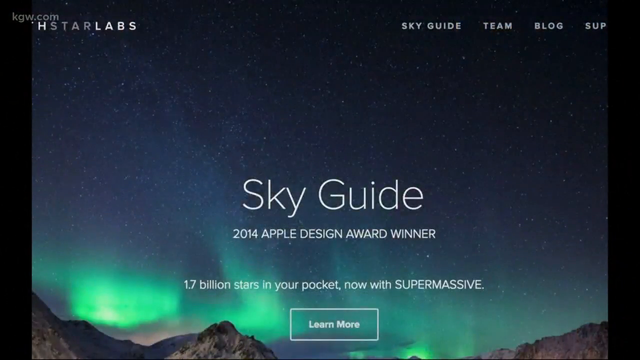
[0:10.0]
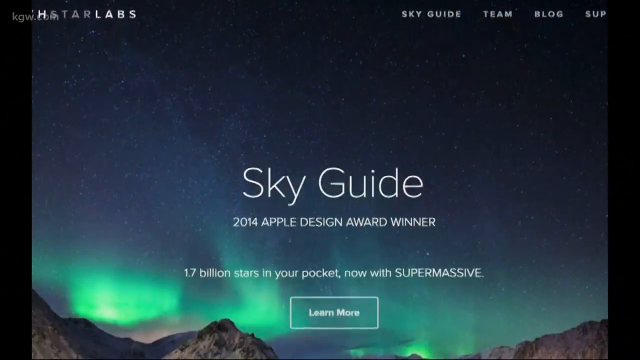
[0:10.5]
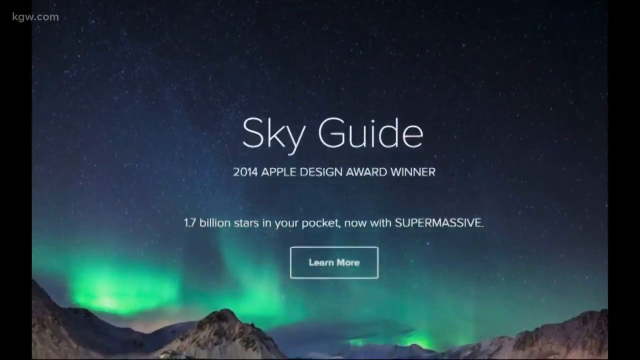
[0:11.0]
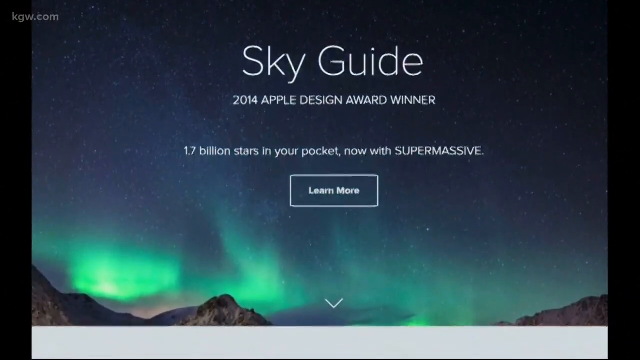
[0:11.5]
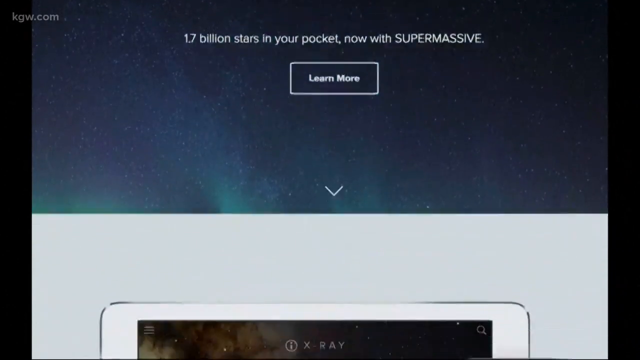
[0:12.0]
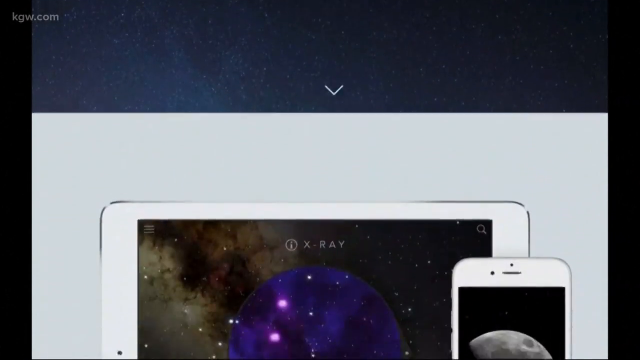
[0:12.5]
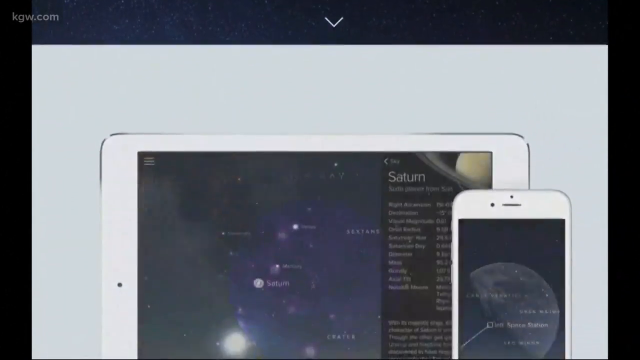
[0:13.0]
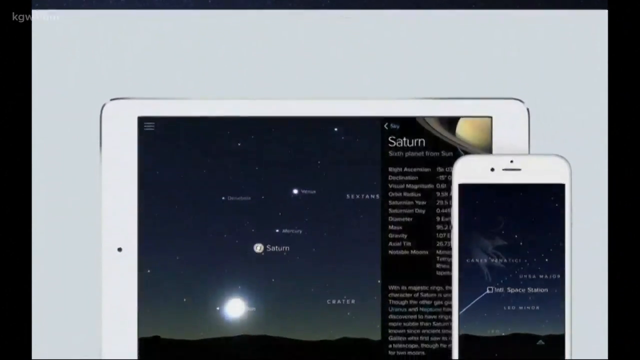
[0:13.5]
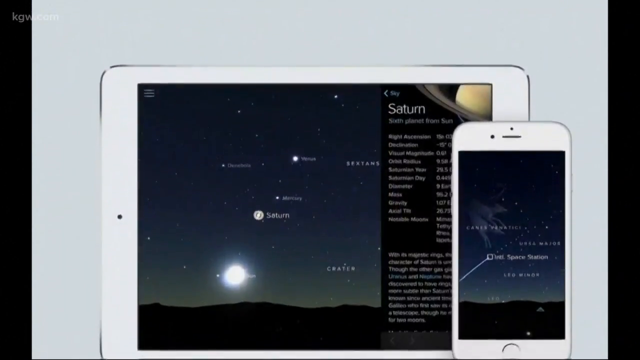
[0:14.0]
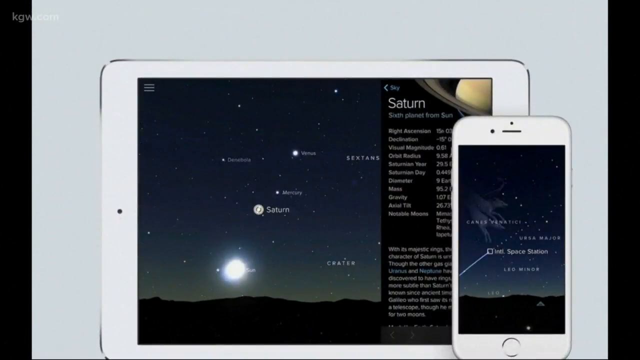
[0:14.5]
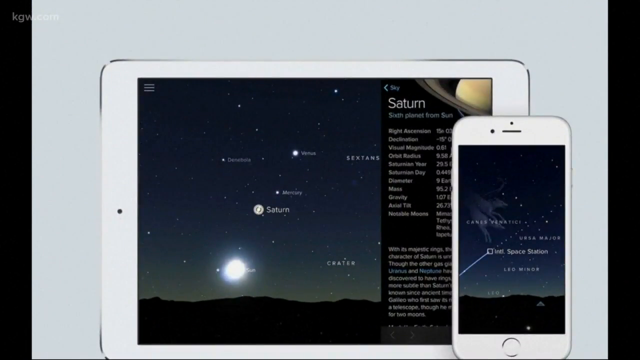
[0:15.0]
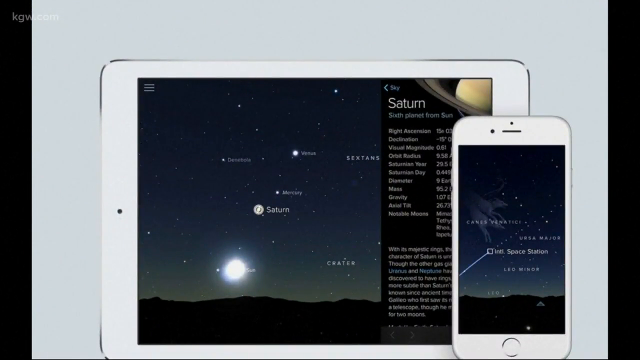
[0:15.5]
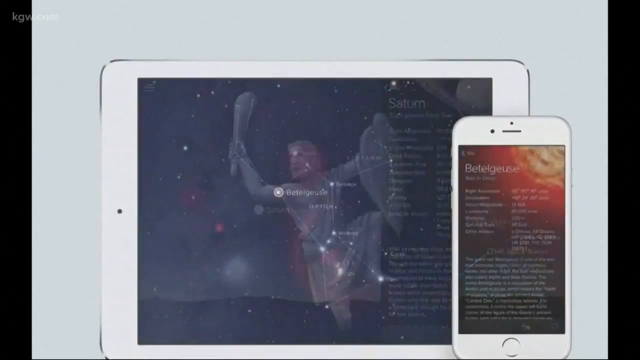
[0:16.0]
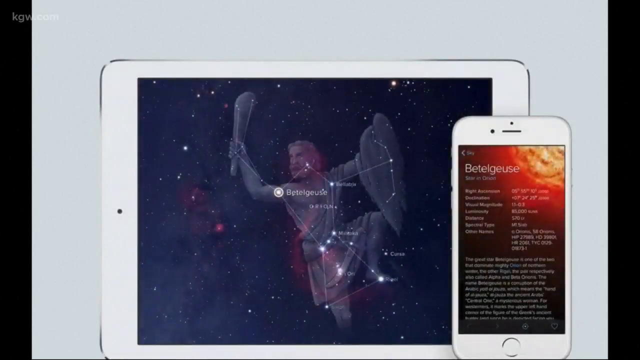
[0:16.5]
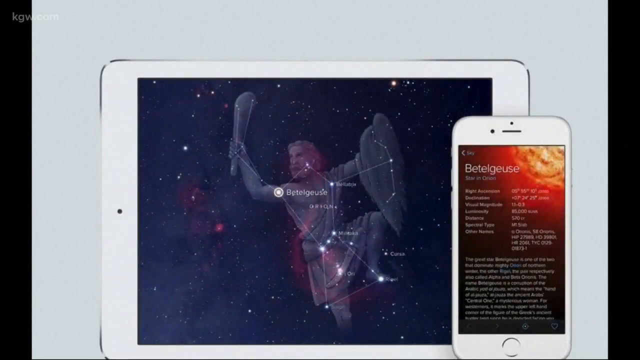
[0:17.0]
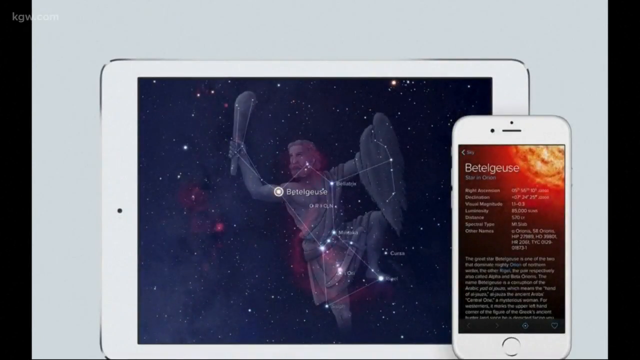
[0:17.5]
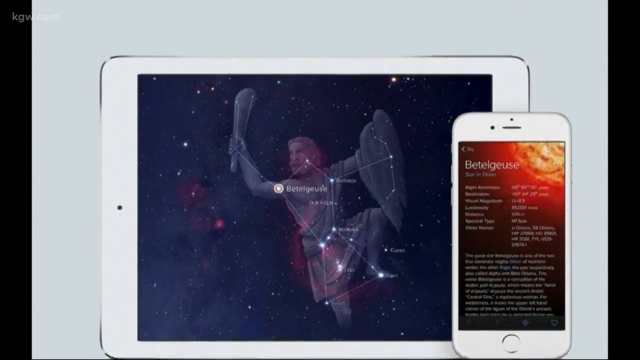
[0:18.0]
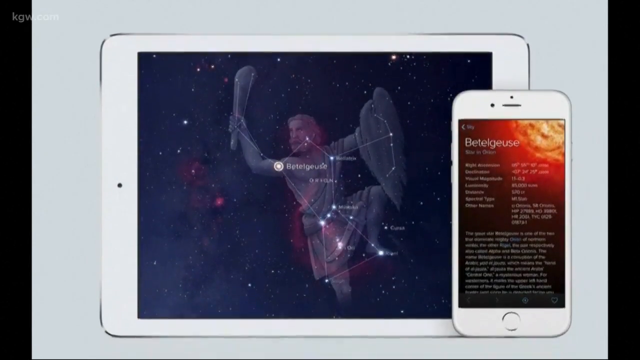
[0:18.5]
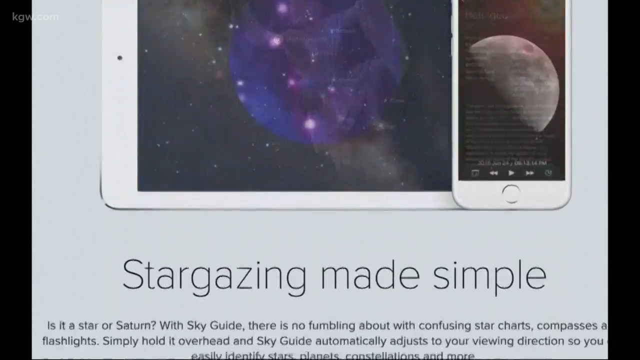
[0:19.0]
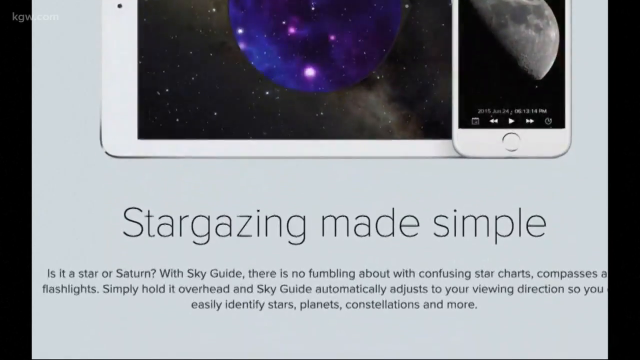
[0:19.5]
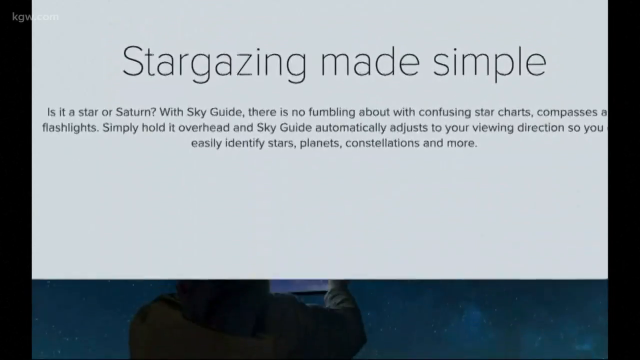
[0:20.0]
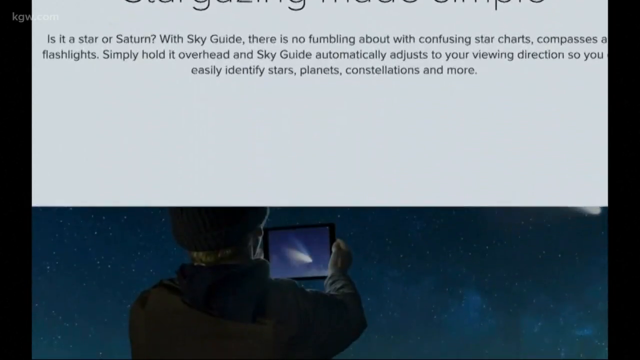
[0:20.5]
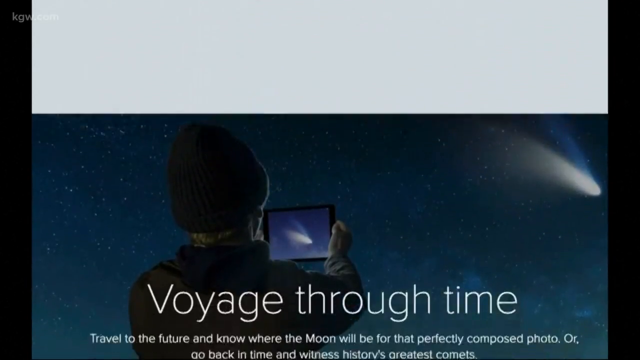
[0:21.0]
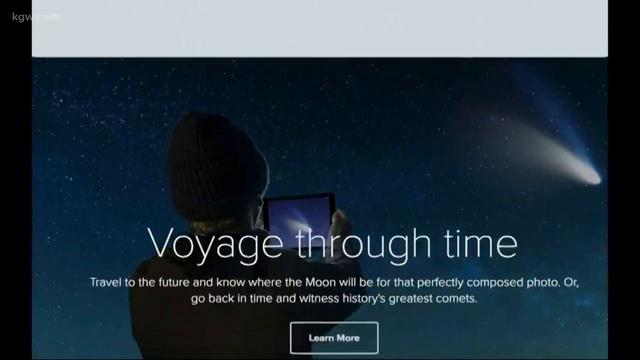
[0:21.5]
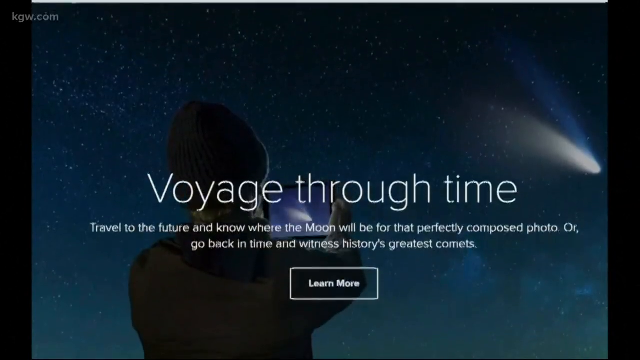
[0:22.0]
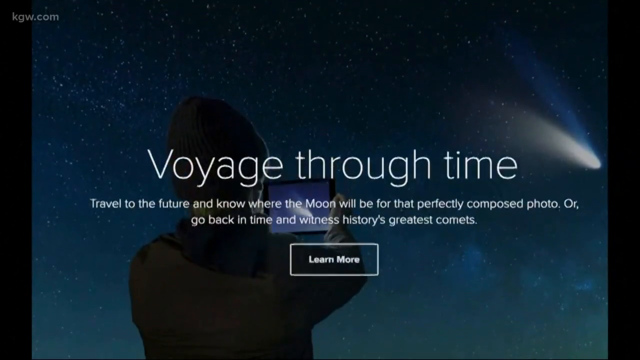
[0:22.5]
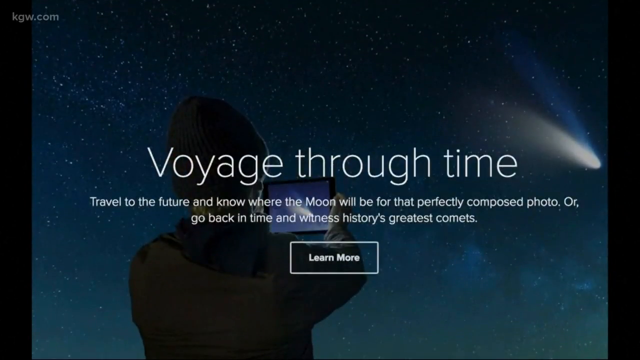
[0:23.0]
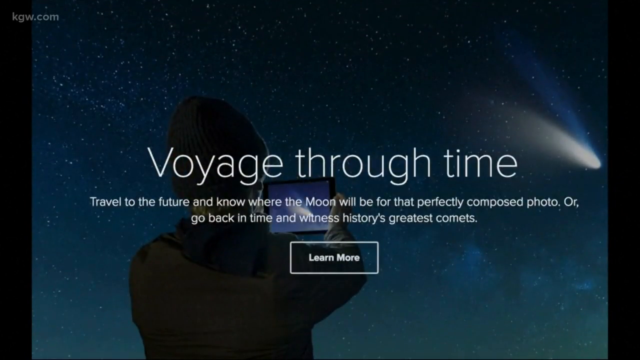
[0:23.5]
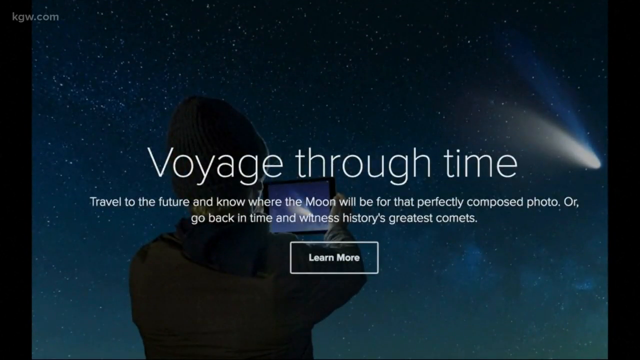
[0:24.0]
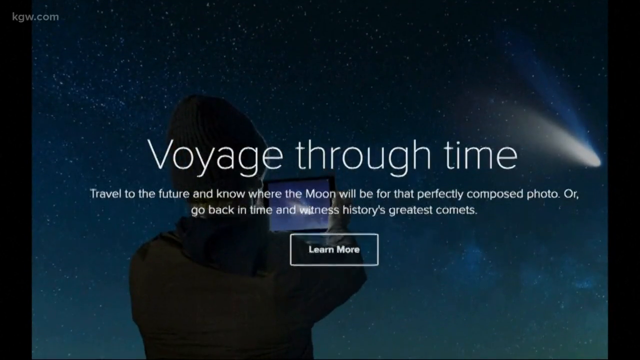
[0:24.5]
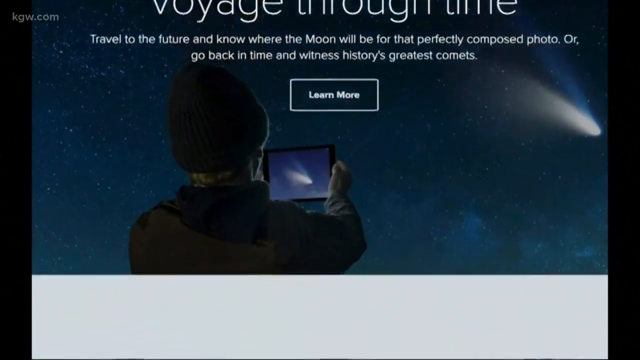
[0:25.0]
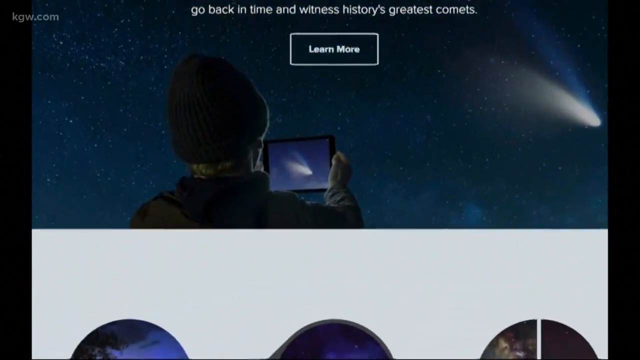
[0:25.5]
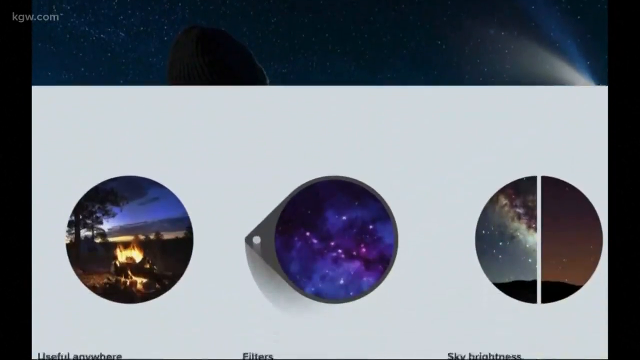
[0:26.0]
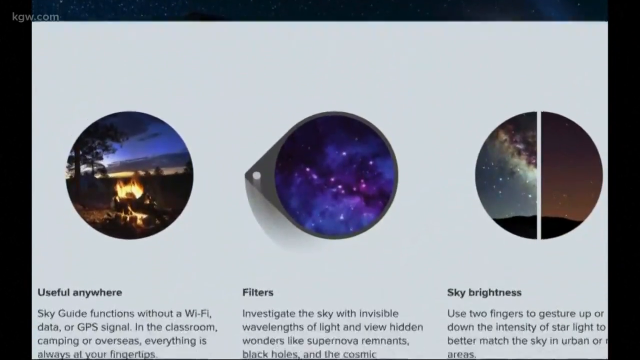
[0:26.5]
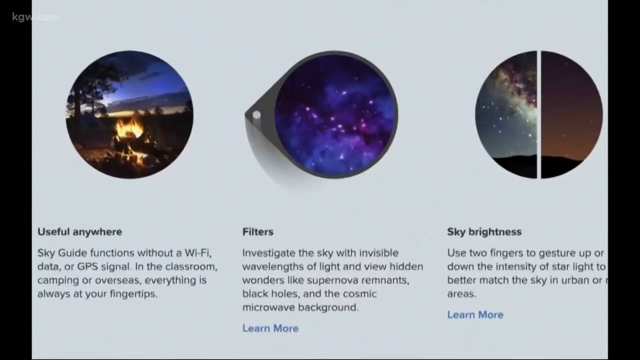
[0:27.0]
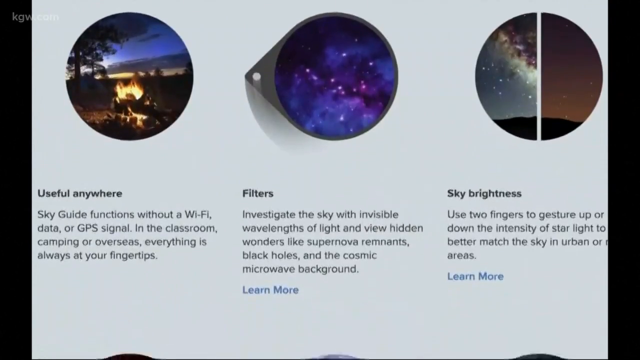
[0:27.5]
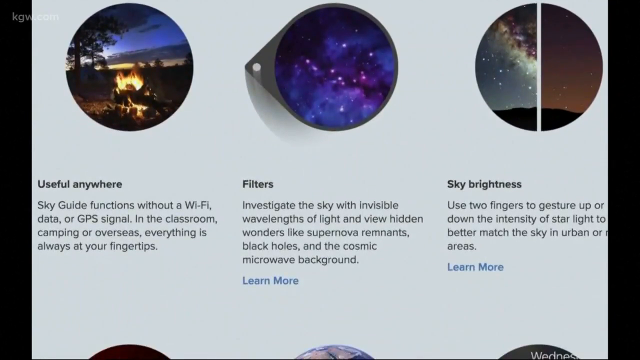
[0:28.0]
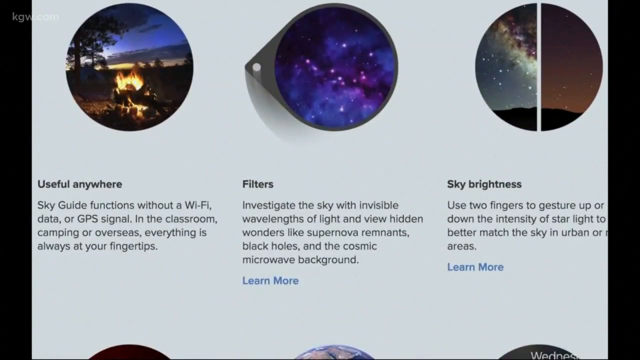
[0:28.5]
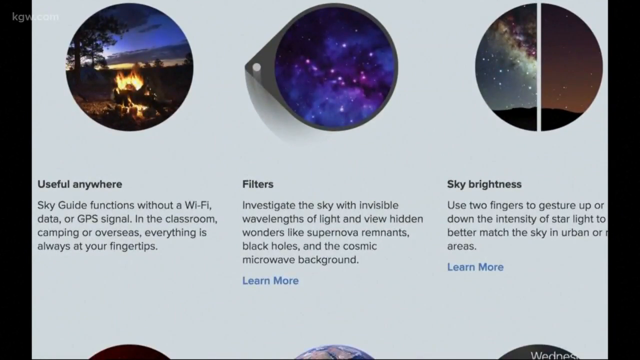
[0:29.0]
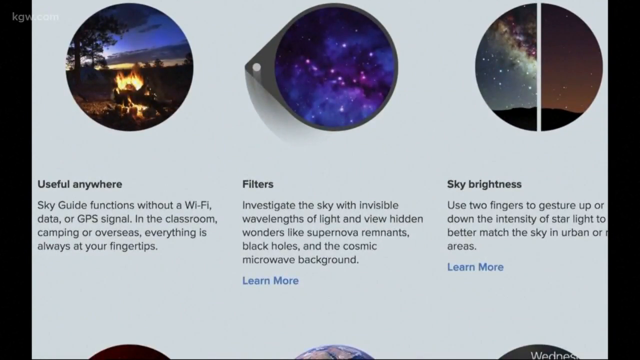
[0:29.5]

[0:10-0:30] Text in the top left corner reads "KGW.com", with "H-STAR Labs" below it. On the right side, reading from right to left, are the words "SUP", "blog", "team" and "Sky Guide", separated by small spaces. In the center of the image, just below halfway down, is "Sky Guide" in a larger font, with "2014 Apple Design Award winner" below it and "1.7 billion stars in your pocket, now with Supermassive" below that. Beneath this is a button reading "Learn More". A down arrow at the bottom of the screen is followed, bringing up an image on a tablet screen with a telephone screen to its right. On the tablet screen, superimposed on an image, is a warrior carrying a club of some sort in the right hand and a shield in the left hand; the image has something to do with the star formation and Betelgeuse. The telephone screen shows text relating to Betelgeuse.